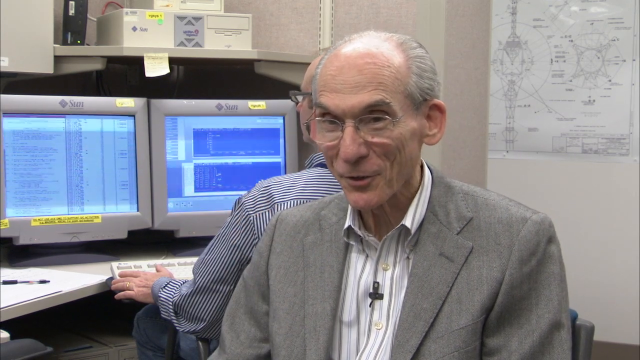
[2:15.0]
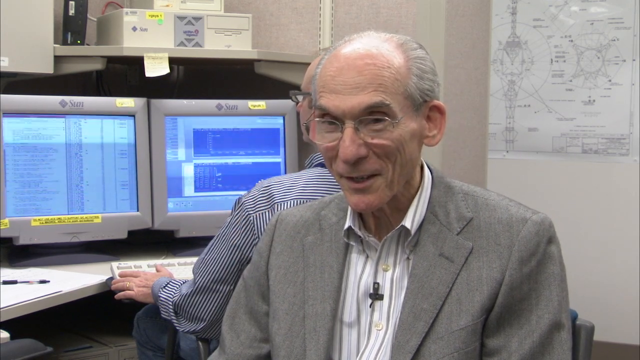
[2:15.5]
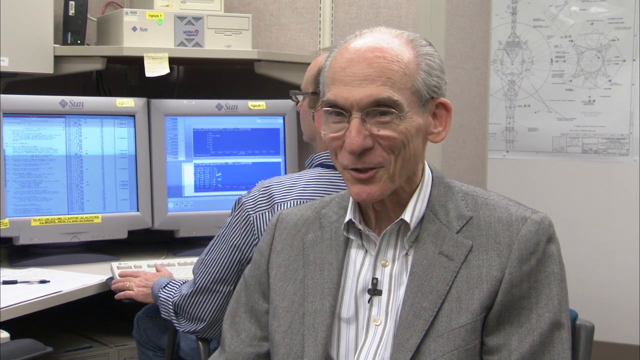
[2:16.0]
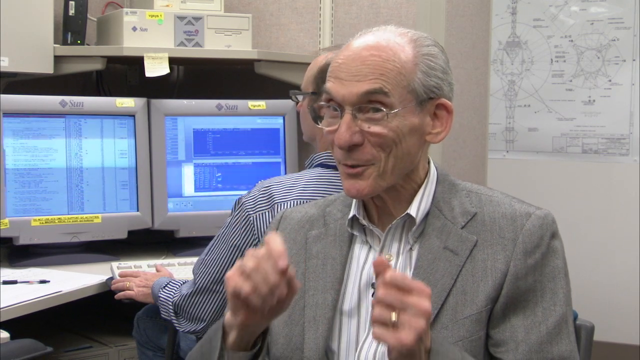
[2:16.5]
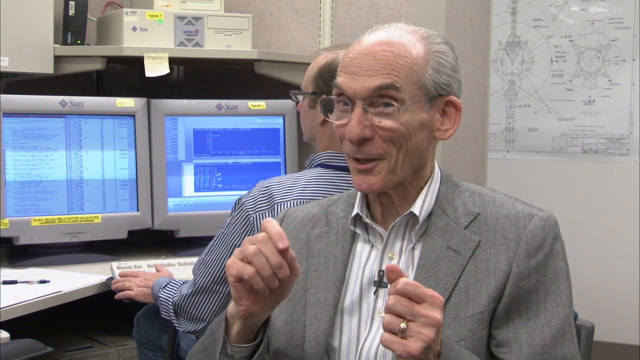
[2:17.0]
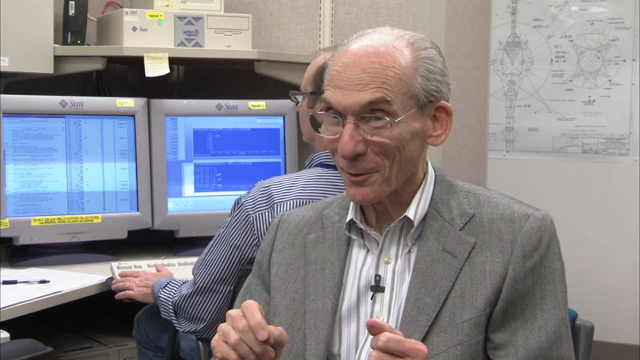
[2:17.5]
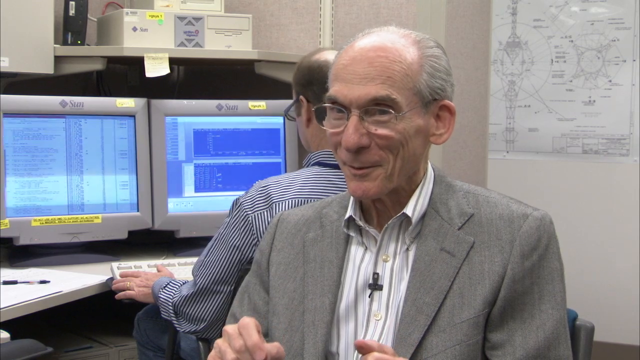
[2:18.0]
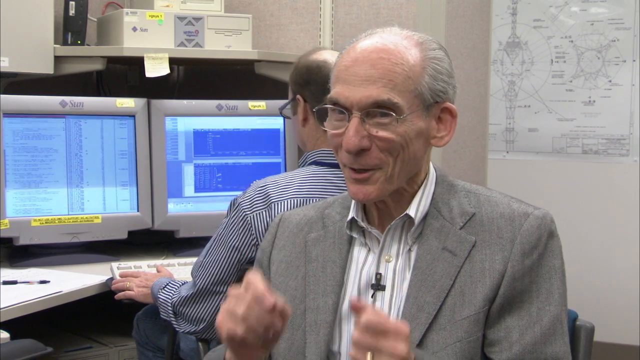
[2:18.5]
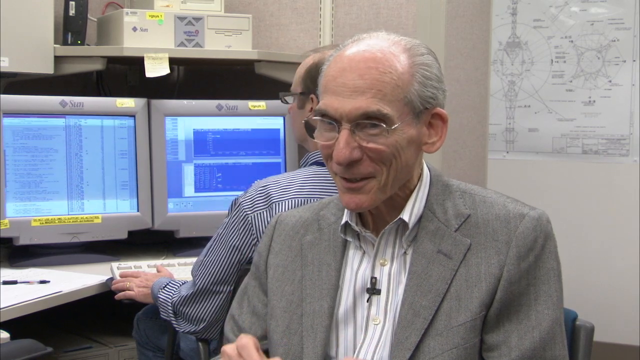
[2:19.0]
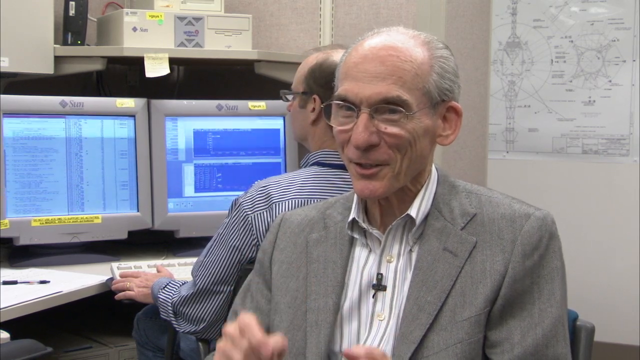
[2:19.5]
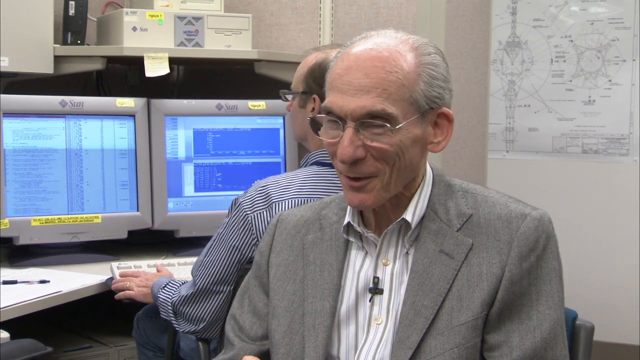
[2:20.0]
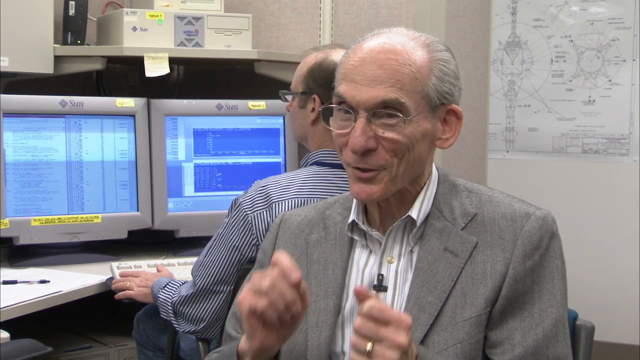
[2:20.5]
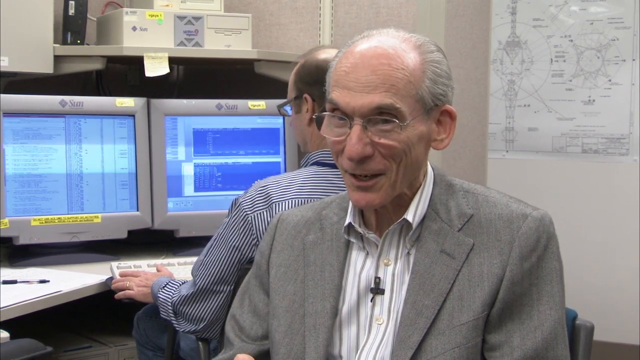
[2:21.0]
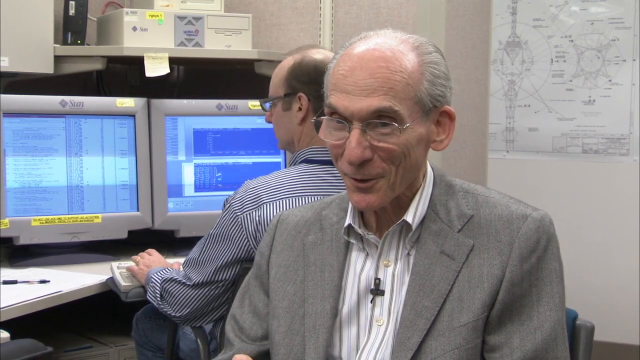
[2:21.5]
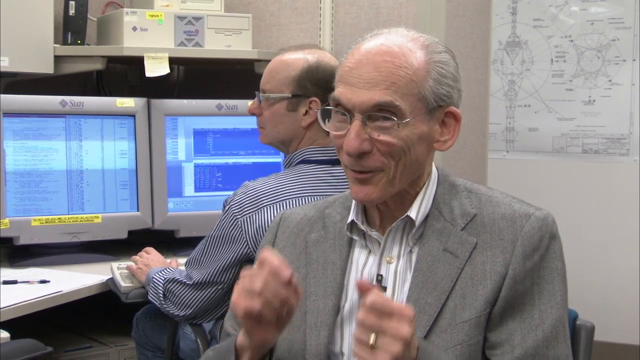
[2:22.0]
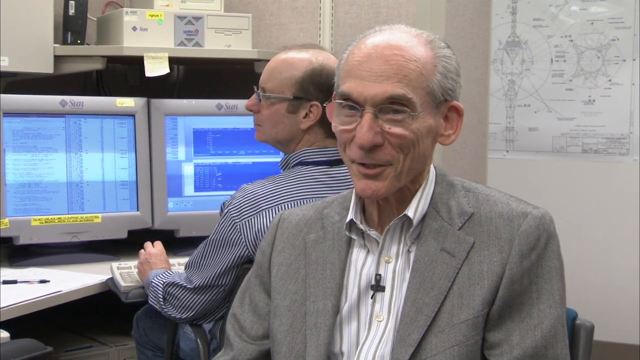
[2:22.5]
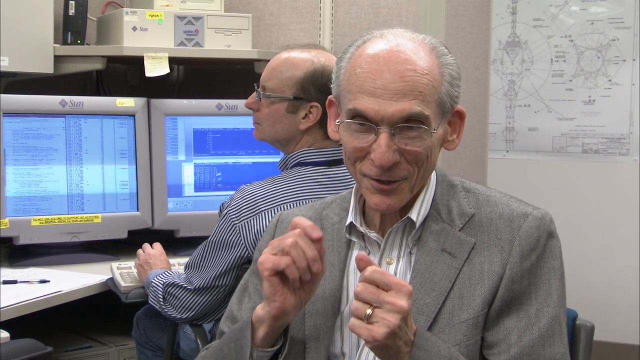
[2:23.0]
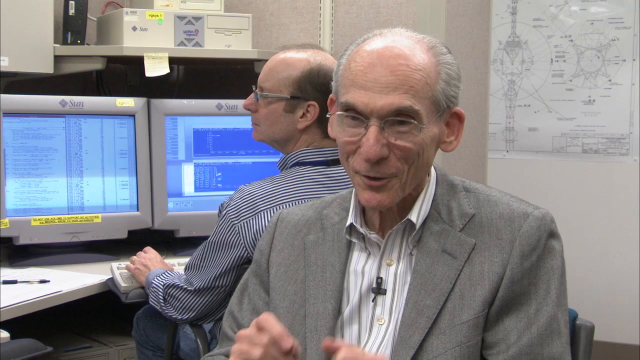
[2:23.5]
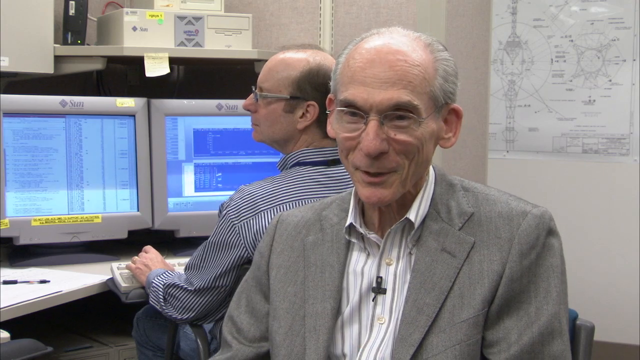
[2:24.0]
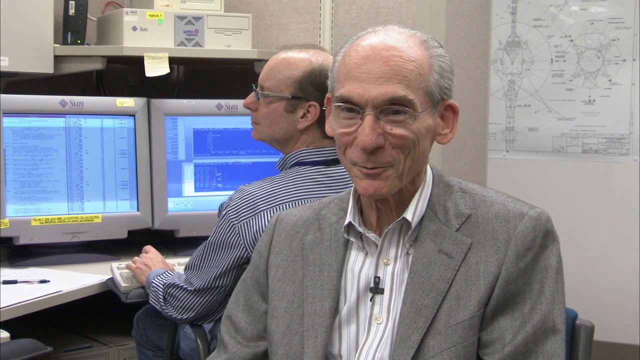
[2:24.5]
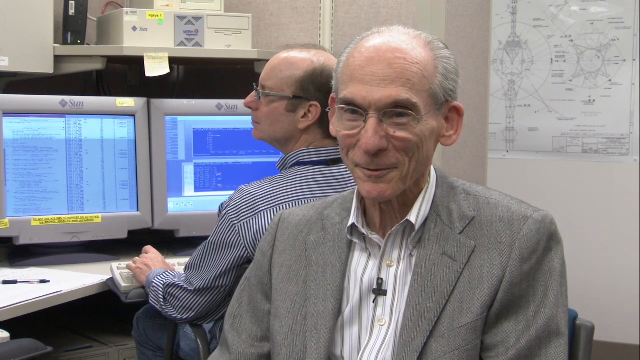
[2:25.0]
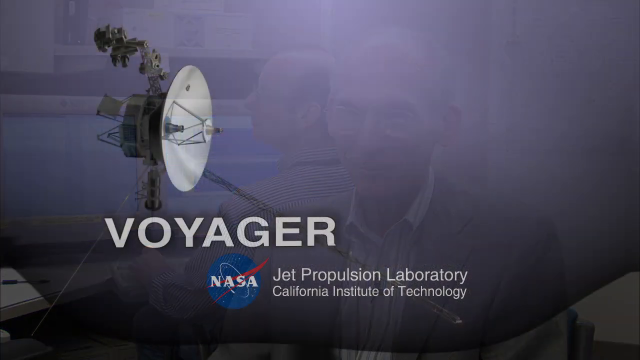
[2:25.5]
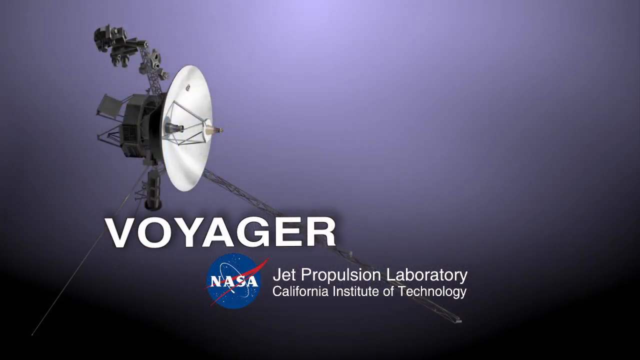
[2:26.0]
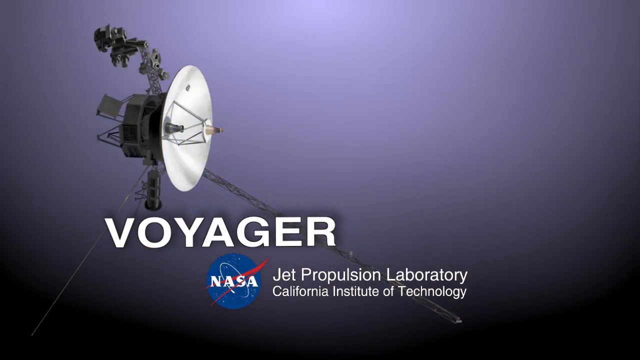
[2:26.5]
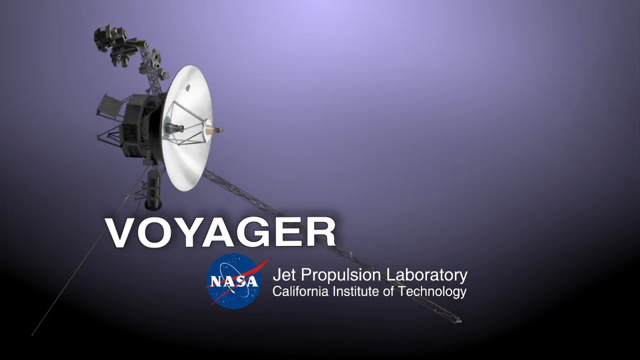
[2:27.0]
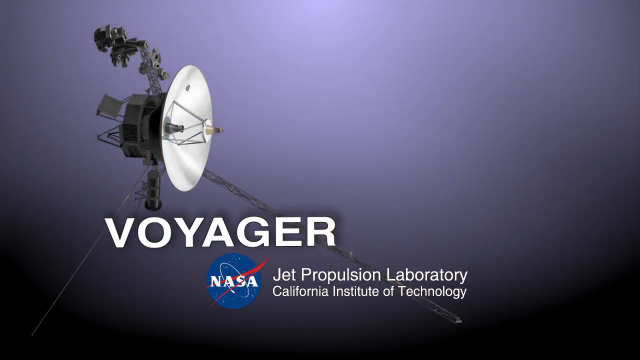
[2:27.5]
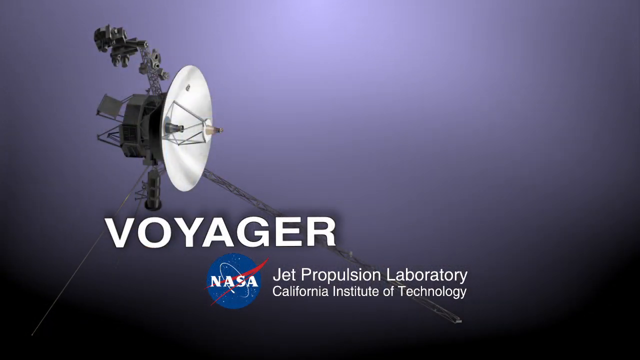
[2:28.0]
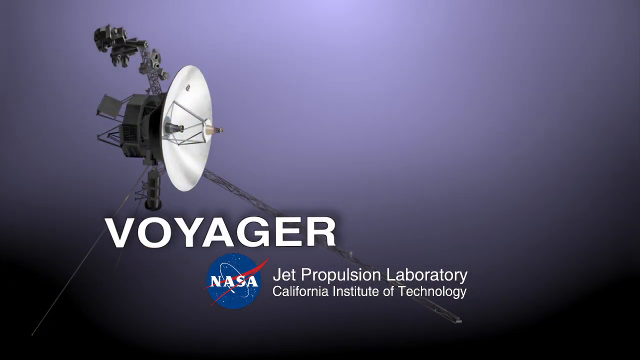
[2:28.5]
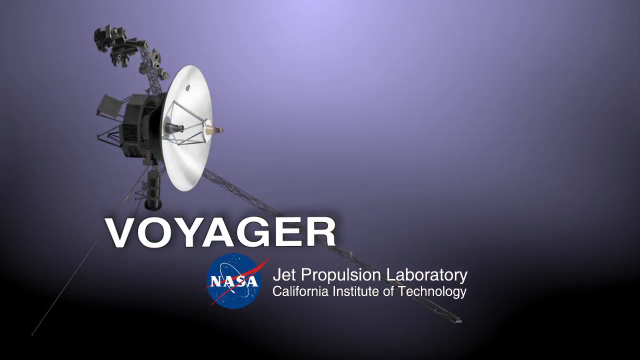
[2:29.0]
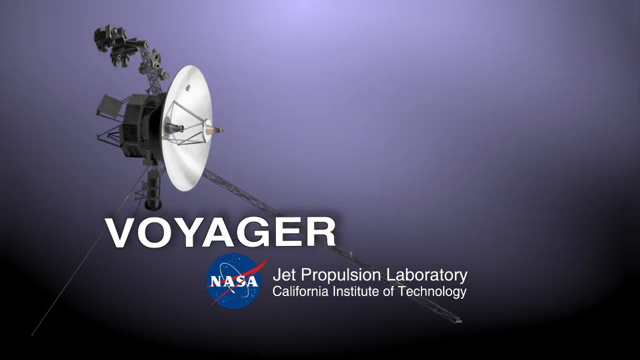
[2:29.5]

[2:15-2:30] A man in a gray outer vest and a white, gray and blue shirt with vertical stripes talks in front of his colleague. In the upper right corner is a diagram with a white background and black lines, looking like technical diagrams that are circular with straight lines going through the middle; it looks like a diagram of the Voyager satellite or some sort of satellite or space technology. On the desk is a white piece of paper with a black pen on top. The next still shows the name "Voyager" with a picture of the satellites and the text "NASA Jet Propulsion Laboratory, California Institute of Technology".